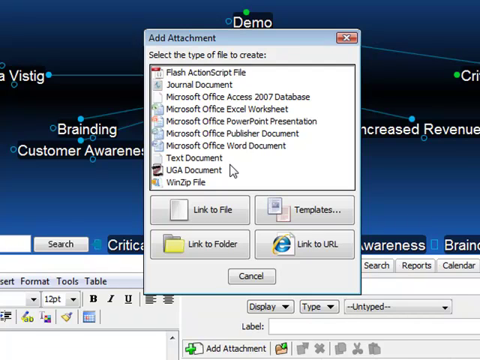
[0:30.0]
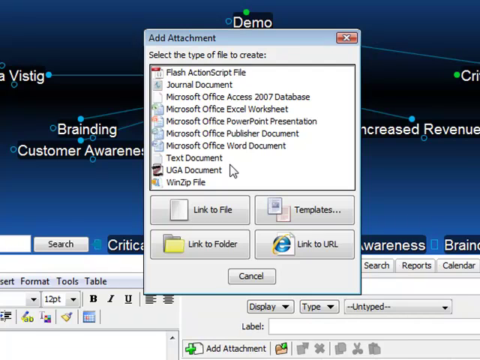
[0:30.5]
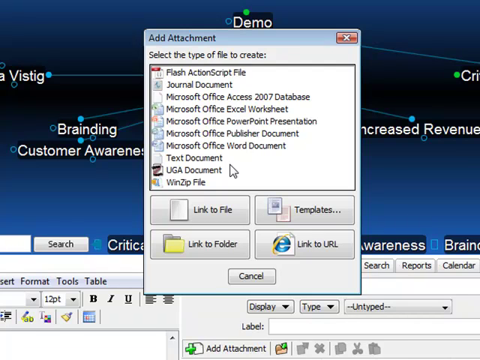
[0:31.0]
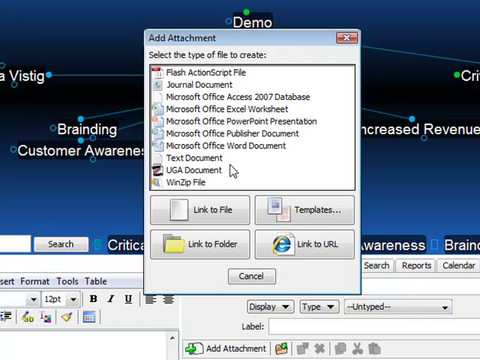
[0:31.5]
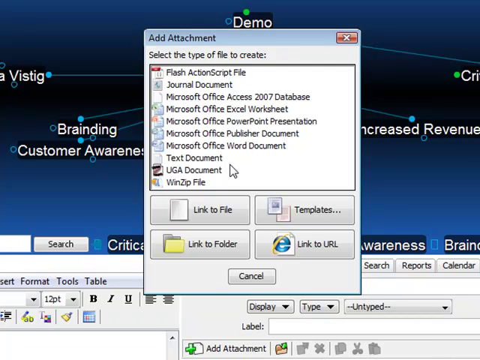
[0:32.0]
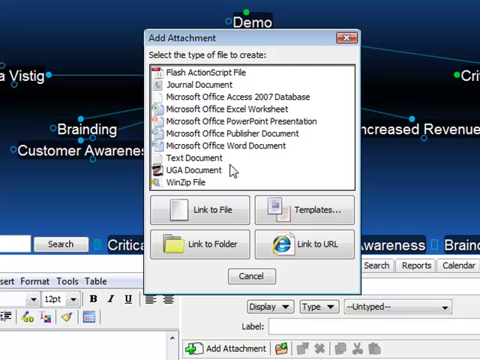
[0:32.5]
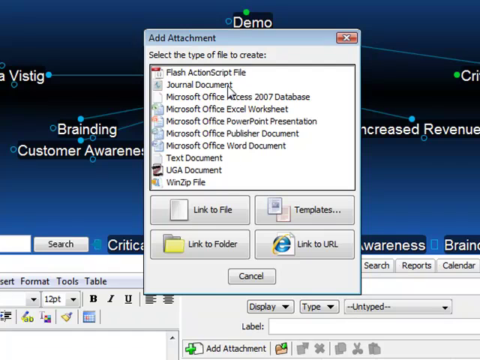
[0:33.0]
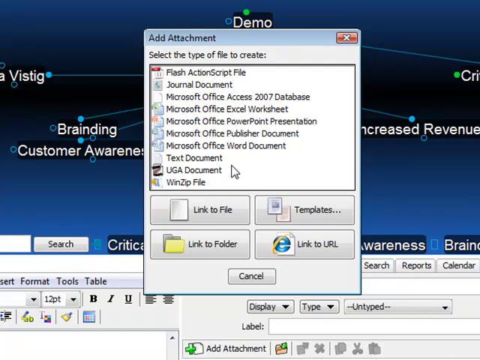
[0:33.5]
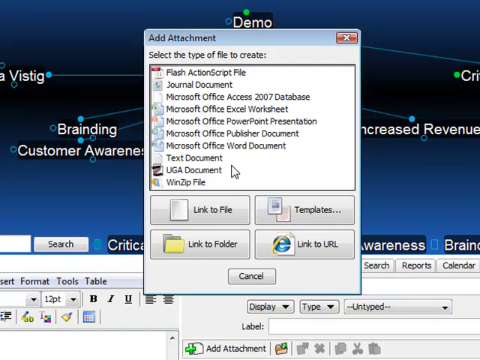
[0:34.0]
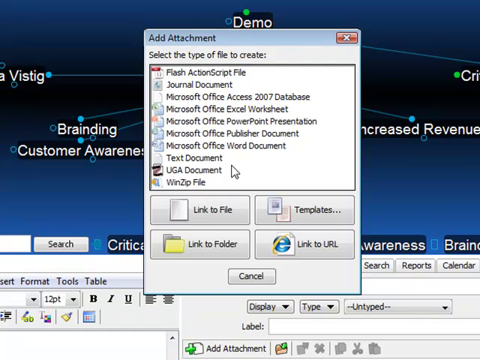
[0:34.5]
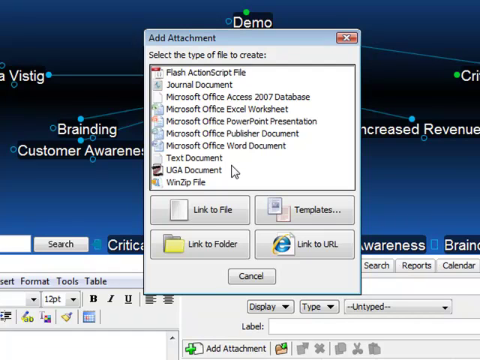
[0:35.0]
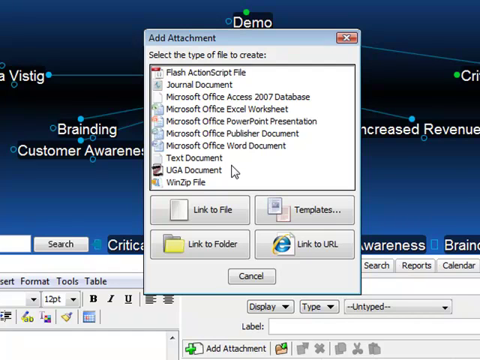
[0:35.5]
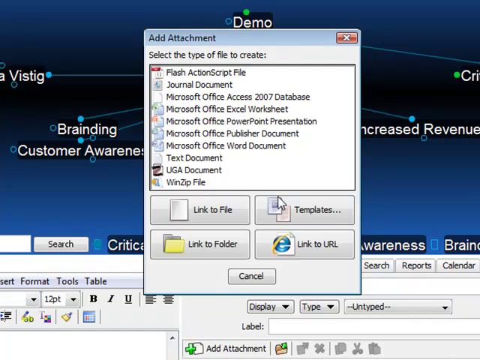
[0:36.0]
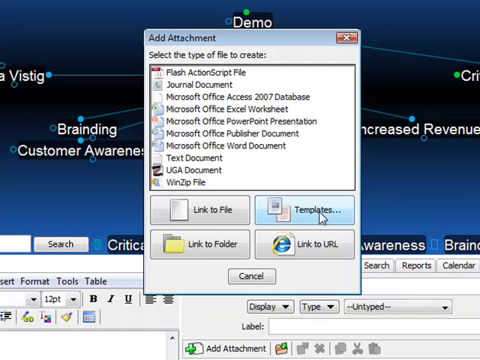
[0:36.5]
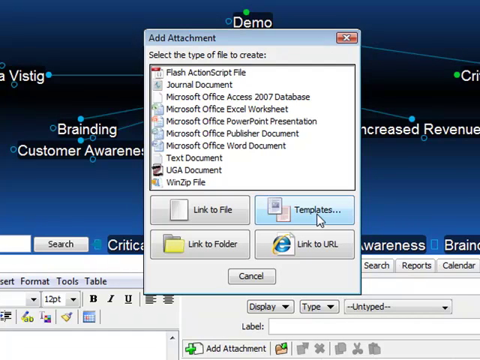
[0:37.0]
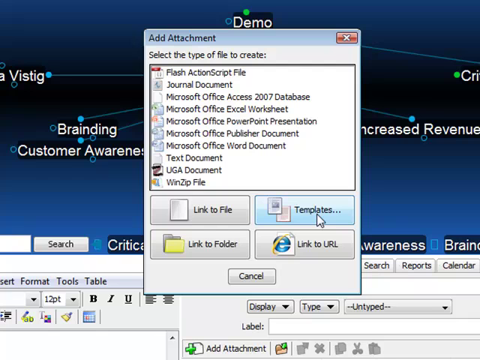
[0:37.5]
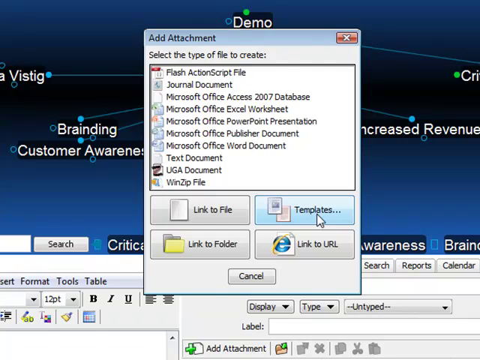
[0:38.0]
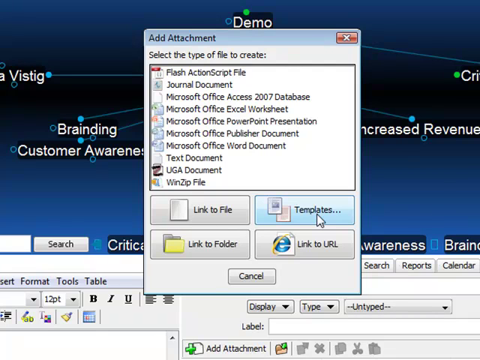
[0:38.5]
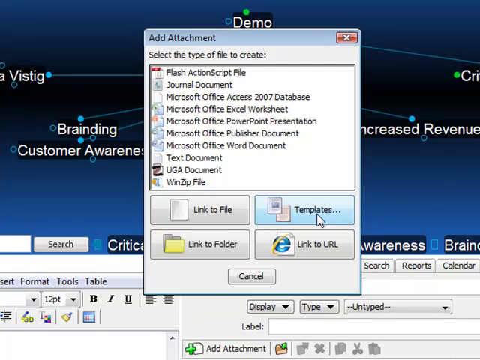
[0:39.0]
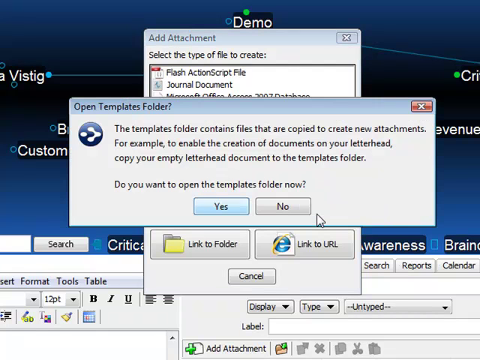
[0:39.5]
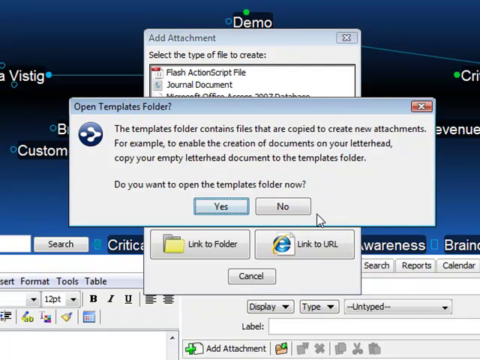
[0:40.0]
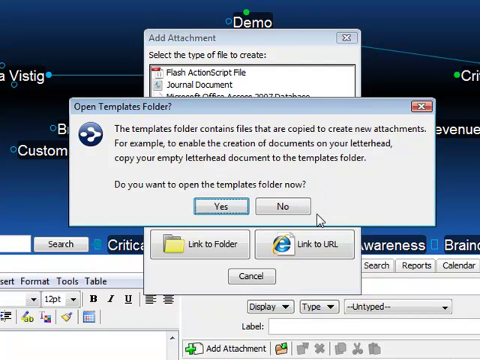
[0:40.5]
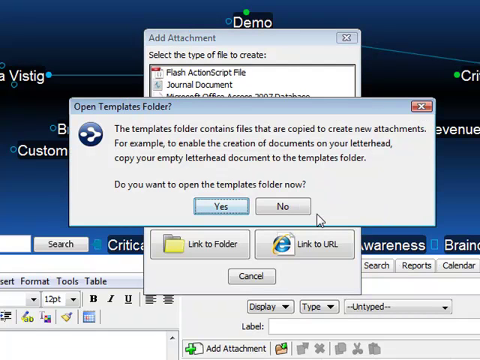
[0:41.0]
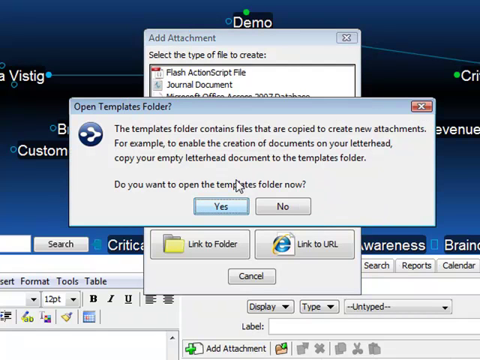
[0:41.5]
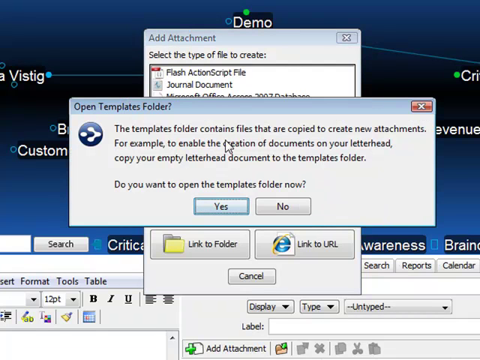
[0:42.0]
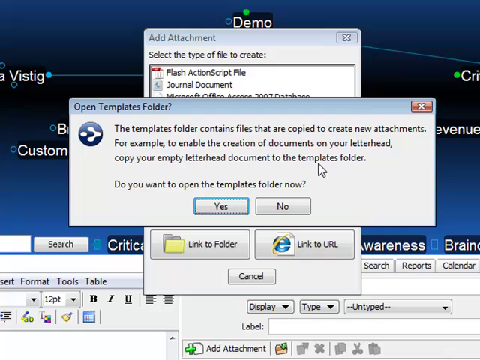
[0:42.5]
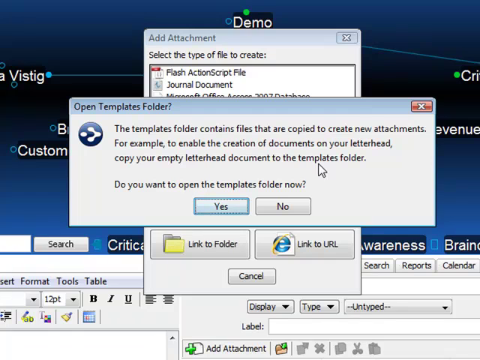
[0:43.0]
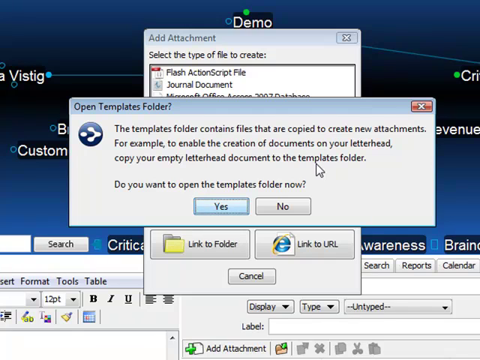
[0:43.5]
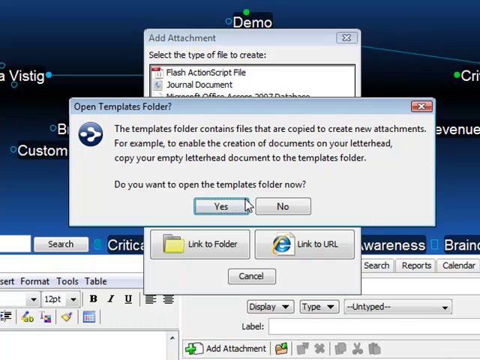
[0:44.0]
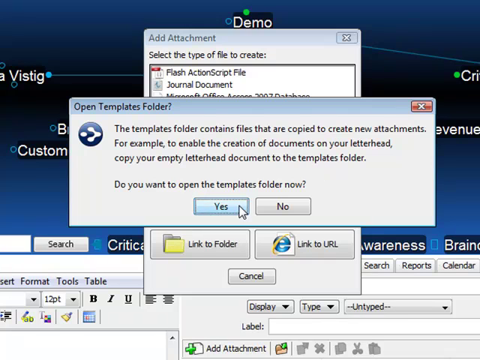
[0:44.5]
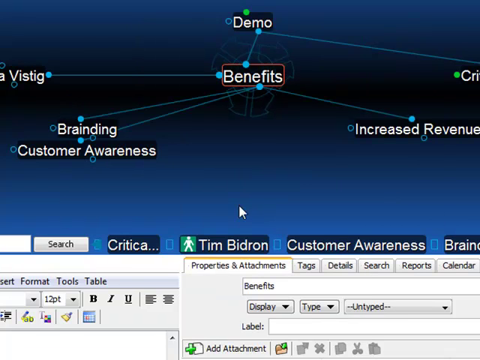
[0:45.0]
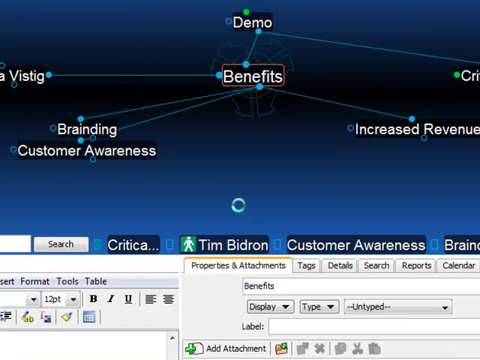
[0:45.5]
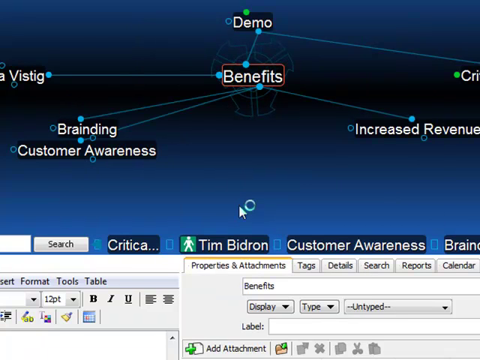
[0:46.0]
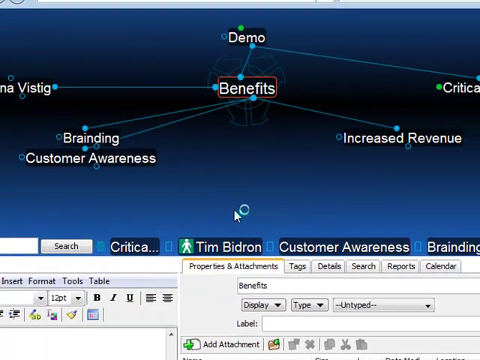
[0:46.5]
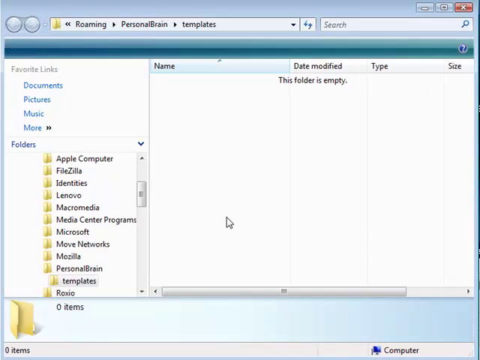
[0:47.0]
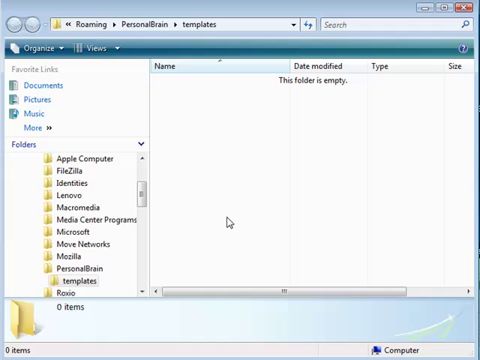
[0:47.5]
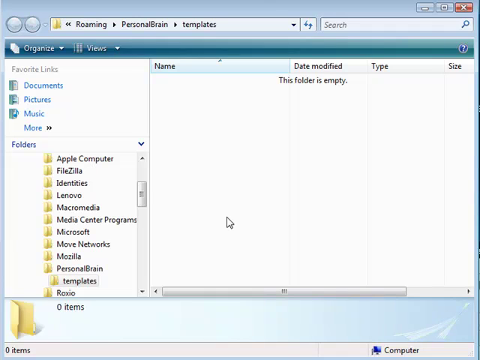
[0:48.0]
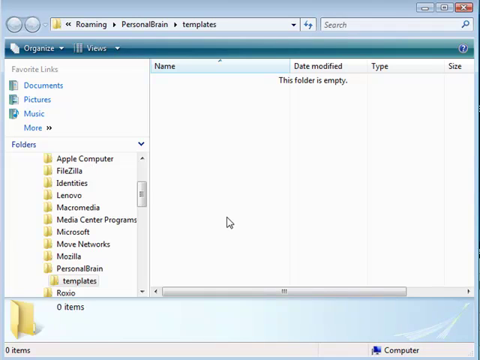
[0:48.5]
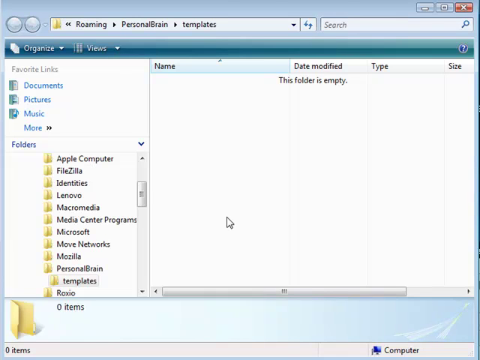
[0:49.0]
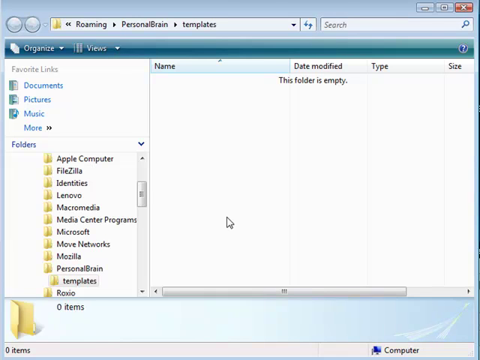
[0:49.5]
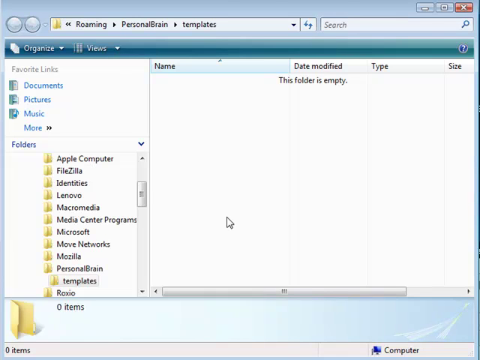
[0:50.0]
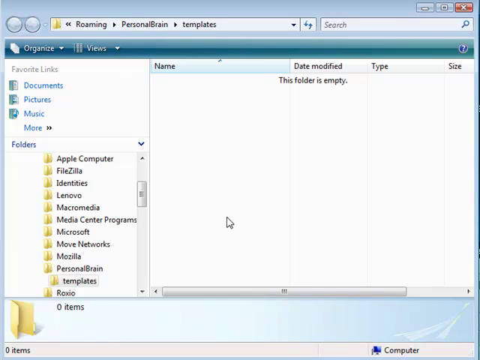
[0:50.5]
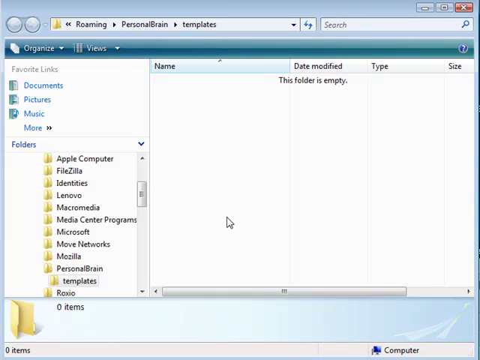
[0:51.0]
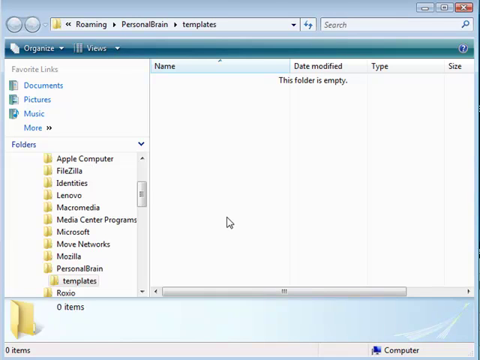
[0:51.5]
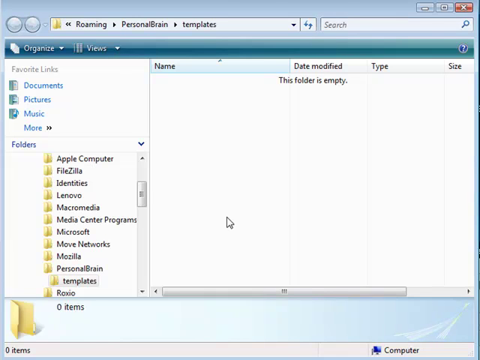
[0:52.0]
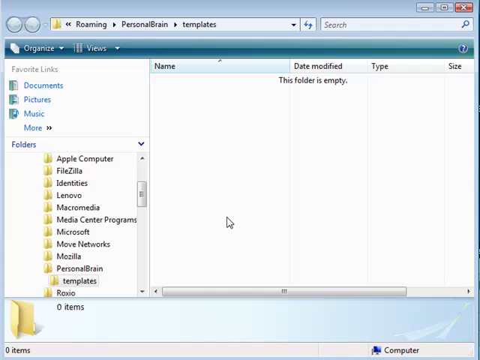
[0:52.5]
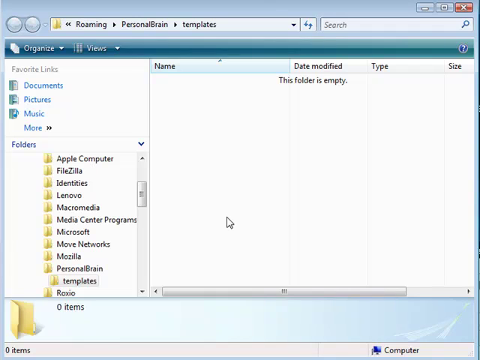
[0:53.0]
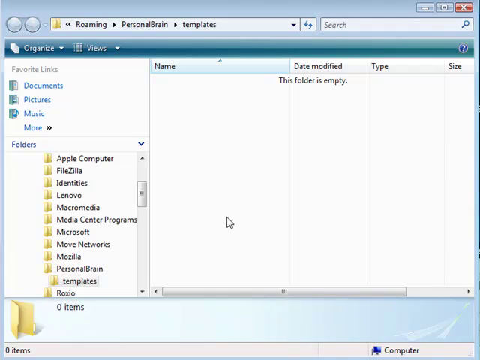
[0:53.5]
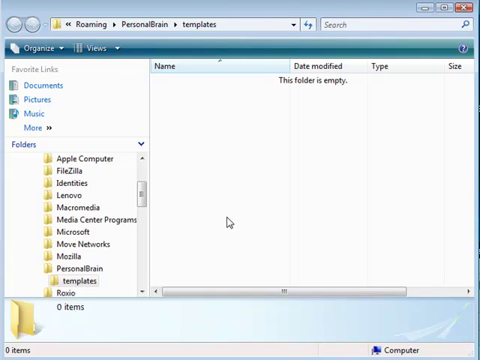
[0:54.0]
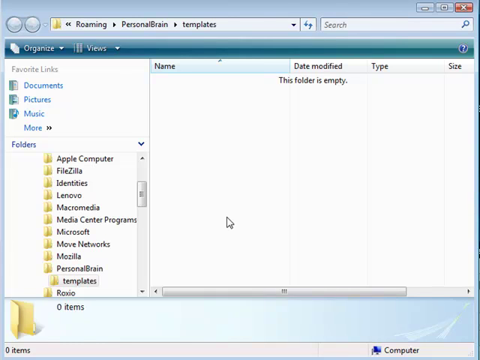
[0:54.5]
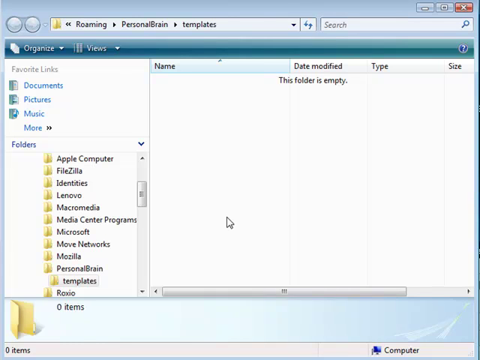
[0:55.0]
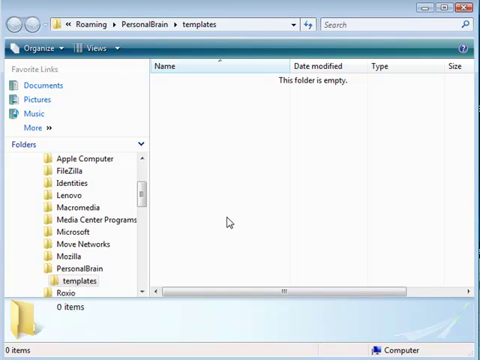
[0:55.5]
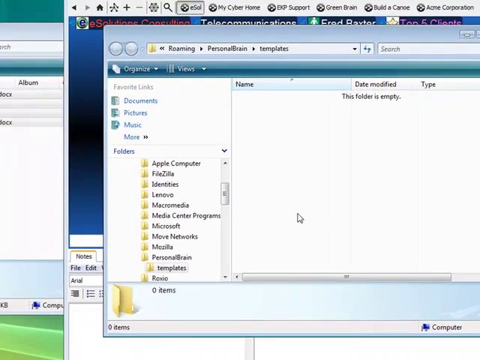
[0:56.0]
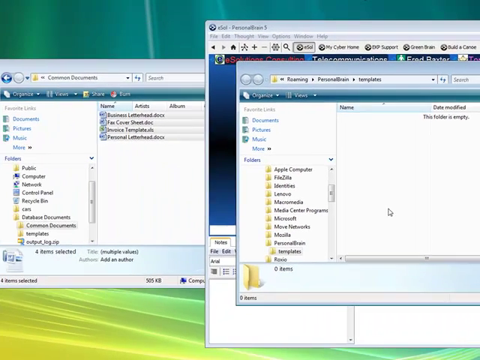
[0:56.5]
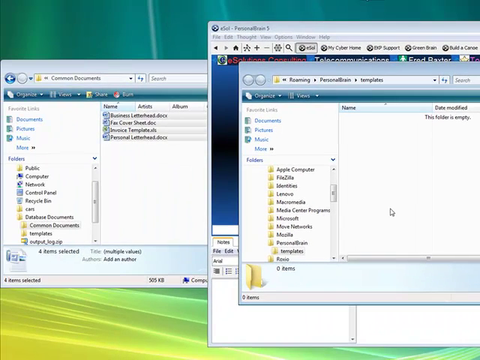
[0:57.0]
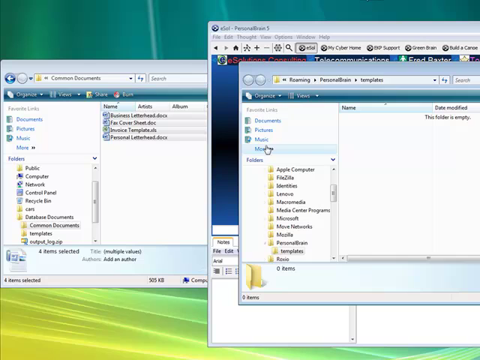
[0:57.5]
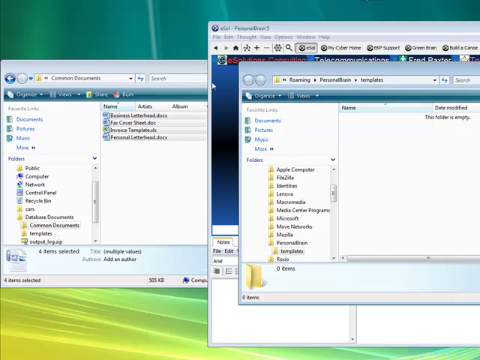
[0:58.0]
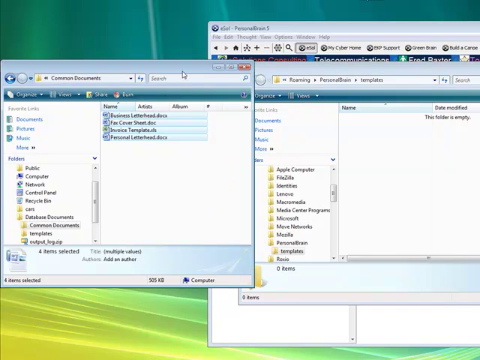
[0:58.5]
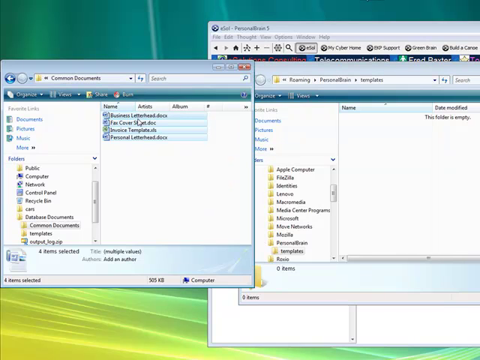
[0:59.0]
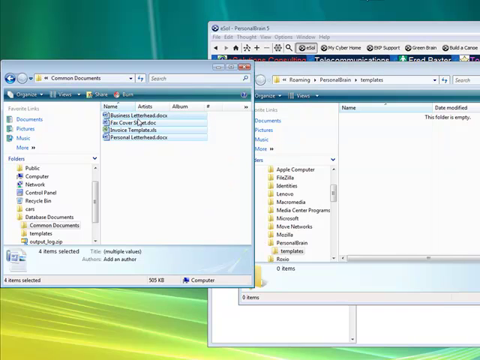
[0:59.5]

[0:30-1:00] The same page with all the options is still shown. The user clicks "Templates," the last option, and a dialog reads "Open Templates Folder. The Templates Folder contains files that are copied to create new attachments. For example, to enable the creation of documents on your letterhead, copy your empty letterhead document to the Templates Folder. Do you want to open the Templates Folder now?" with the options Yes and No. The user clicks Yes, and a Templates folder opens inside the Personal Brain folder in the Roaming folder; it says the folder is empty. The view then zooms out to show another folder, which the user clicks; it contains four documents: businessletterhead.docs, faxcoversheet.doc, what appears to be invoicetemplate.xlz, and personalletterhead.docs.